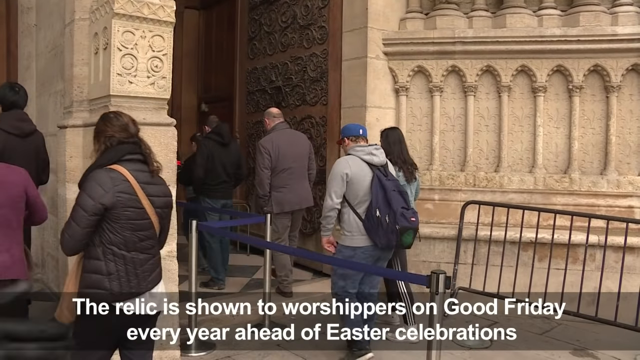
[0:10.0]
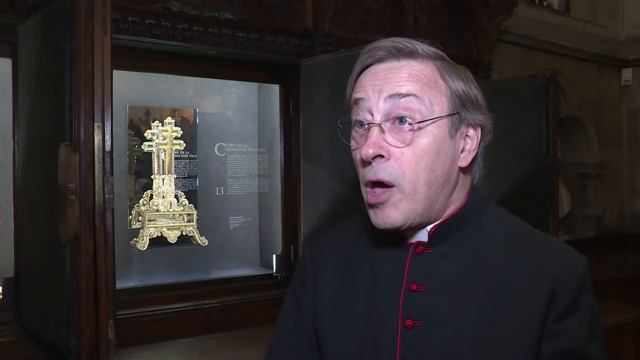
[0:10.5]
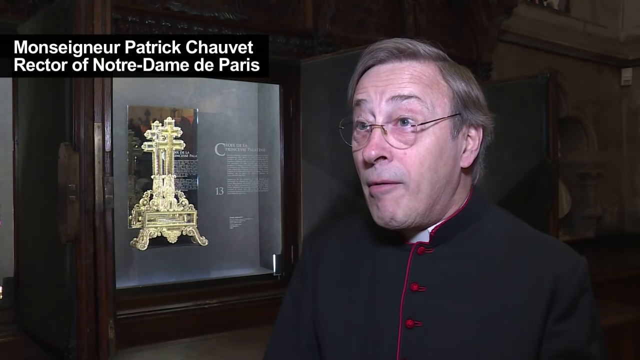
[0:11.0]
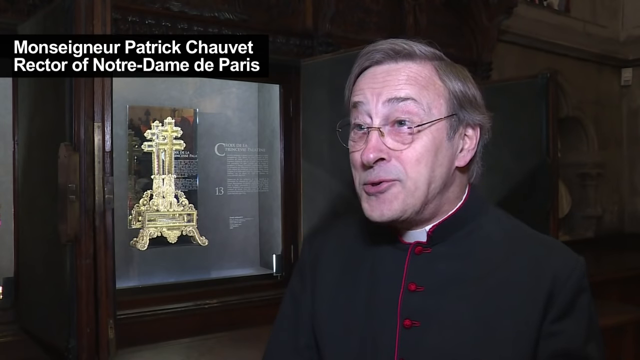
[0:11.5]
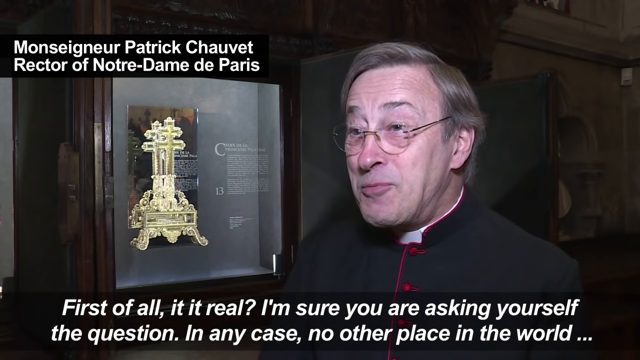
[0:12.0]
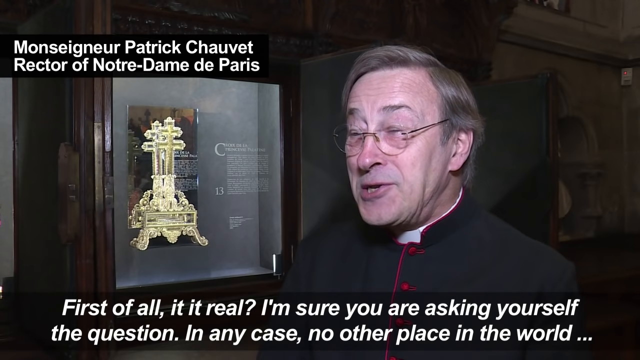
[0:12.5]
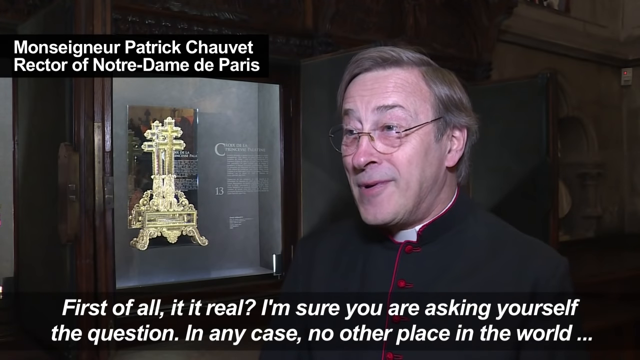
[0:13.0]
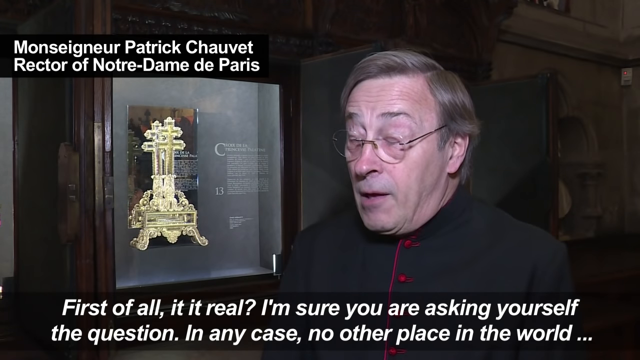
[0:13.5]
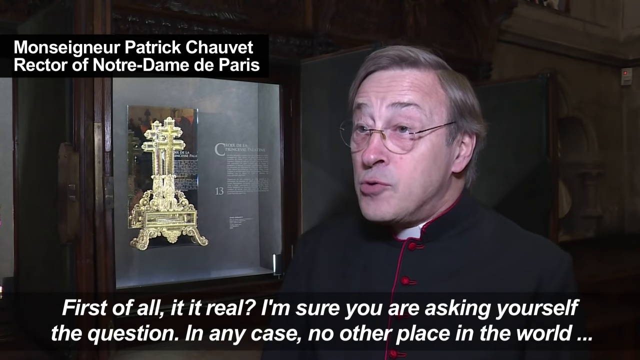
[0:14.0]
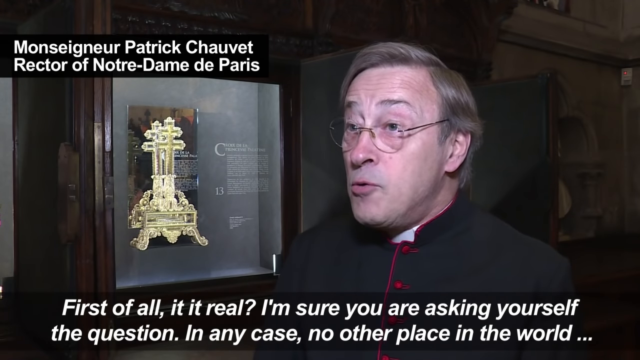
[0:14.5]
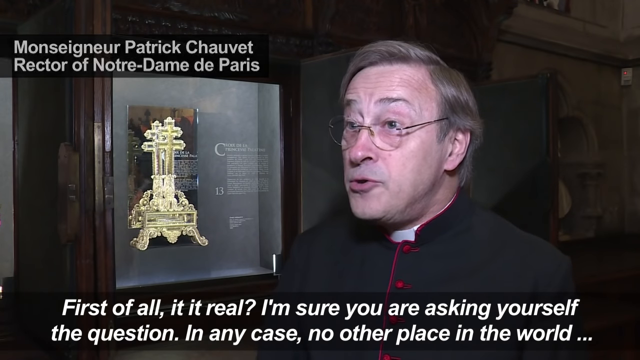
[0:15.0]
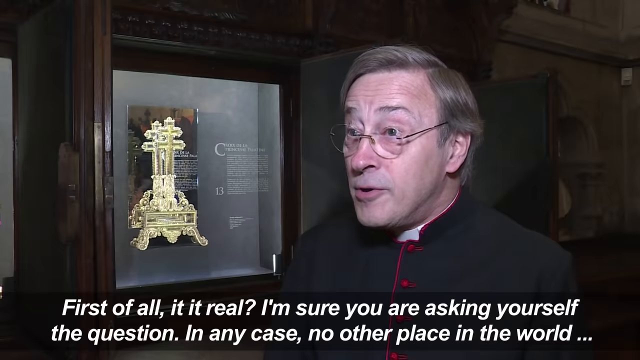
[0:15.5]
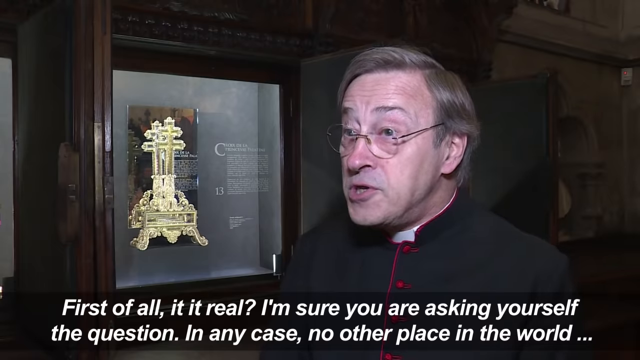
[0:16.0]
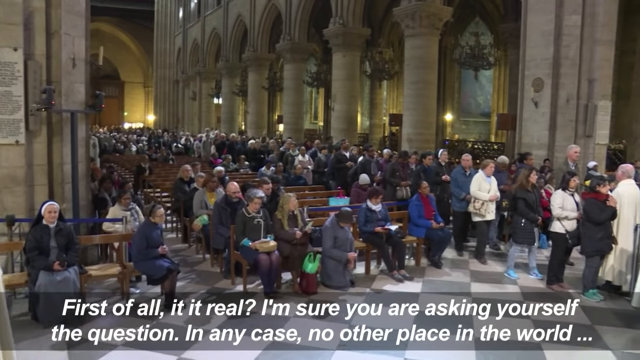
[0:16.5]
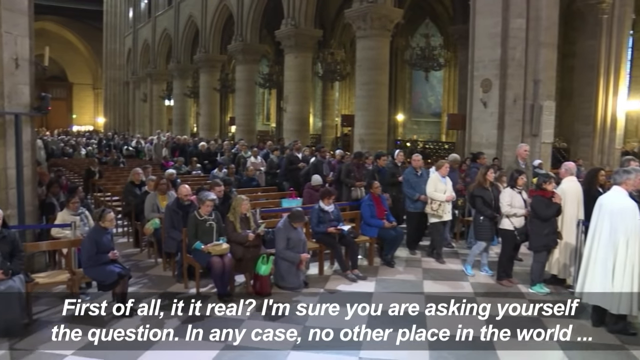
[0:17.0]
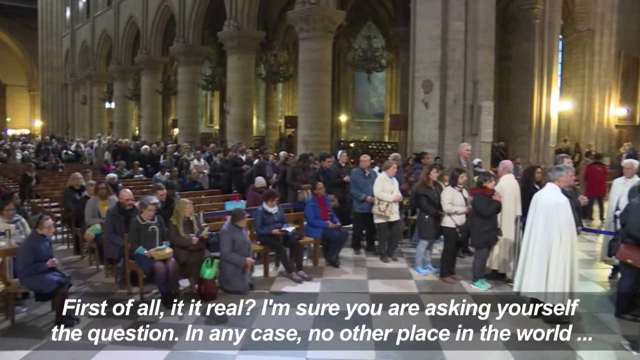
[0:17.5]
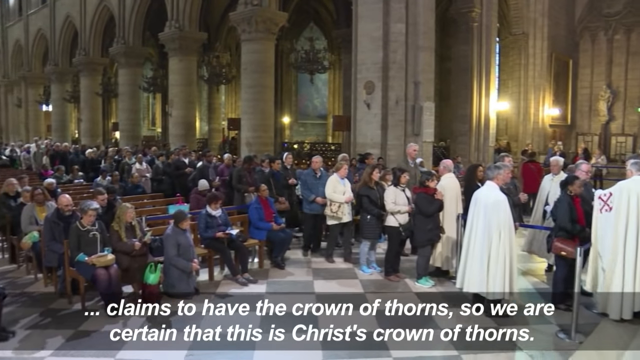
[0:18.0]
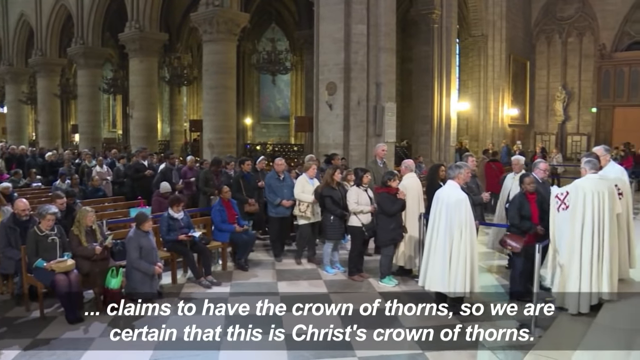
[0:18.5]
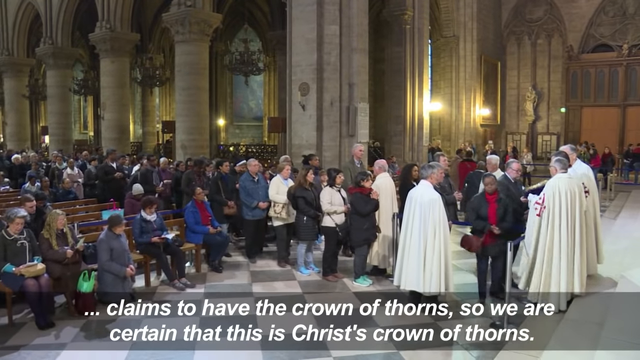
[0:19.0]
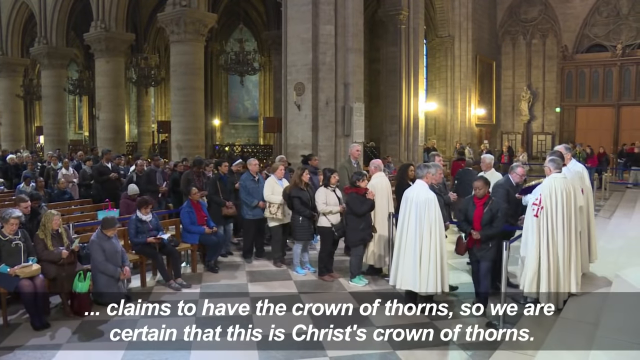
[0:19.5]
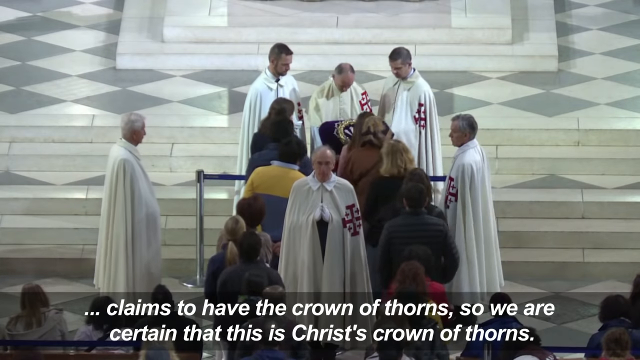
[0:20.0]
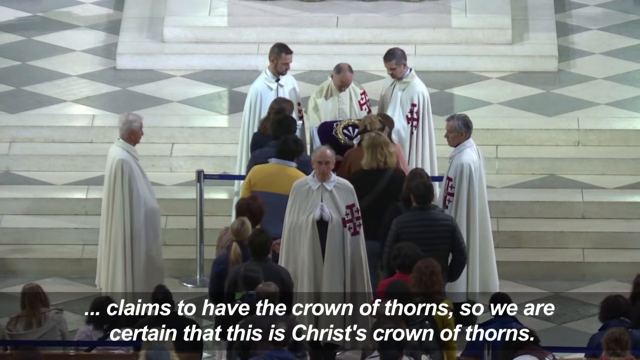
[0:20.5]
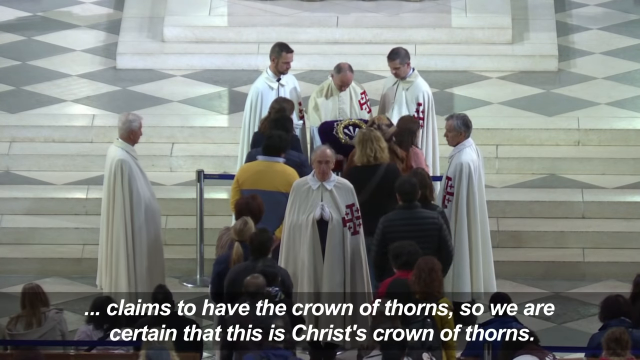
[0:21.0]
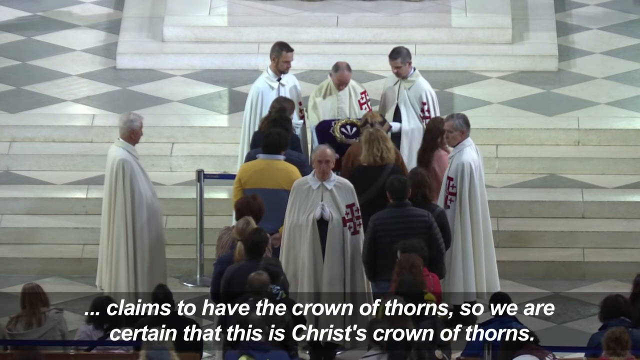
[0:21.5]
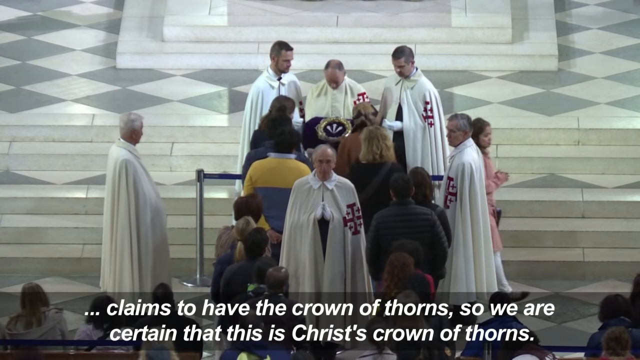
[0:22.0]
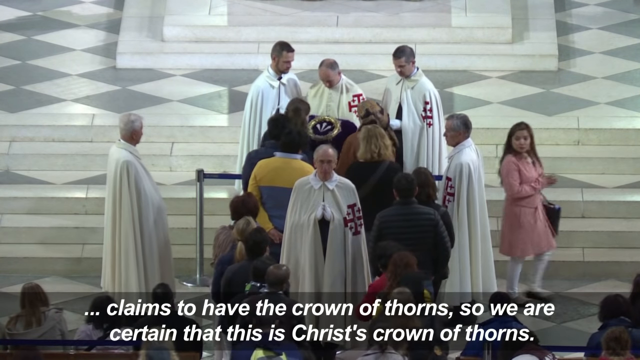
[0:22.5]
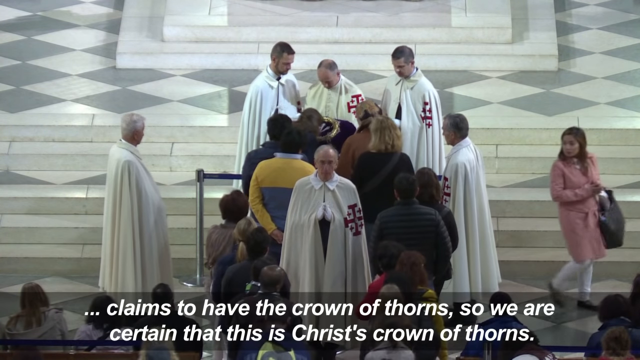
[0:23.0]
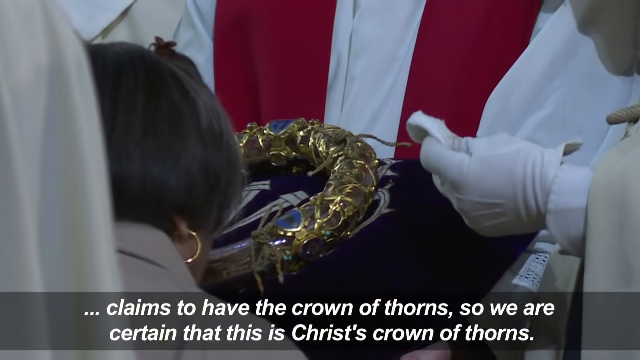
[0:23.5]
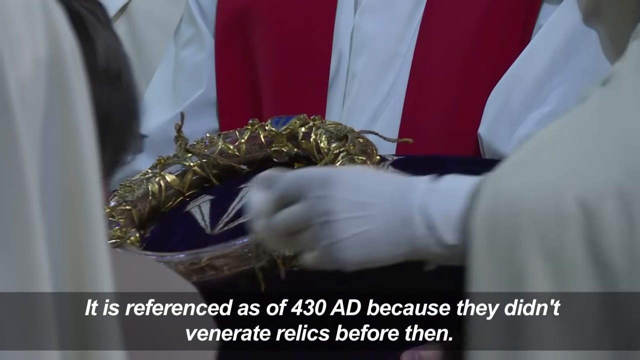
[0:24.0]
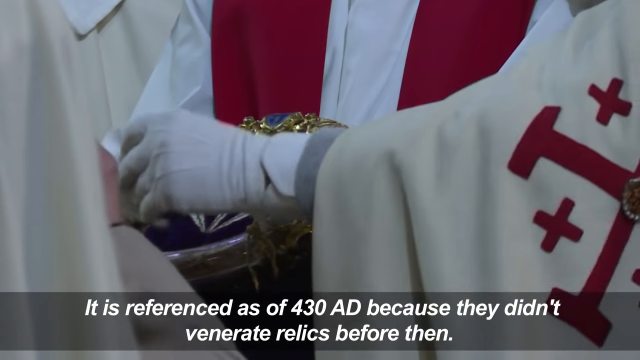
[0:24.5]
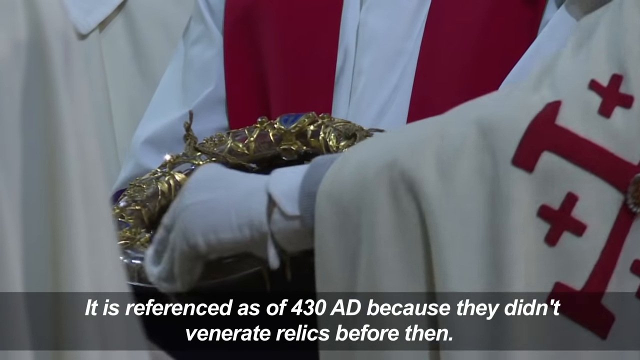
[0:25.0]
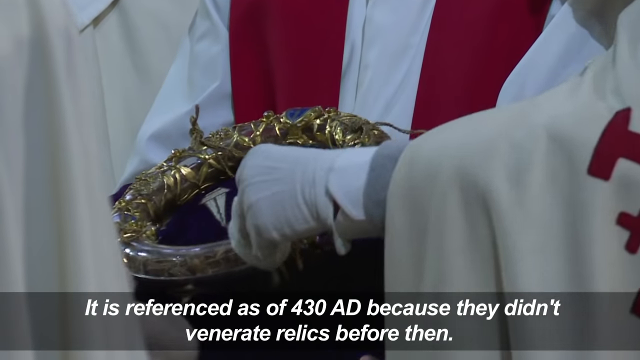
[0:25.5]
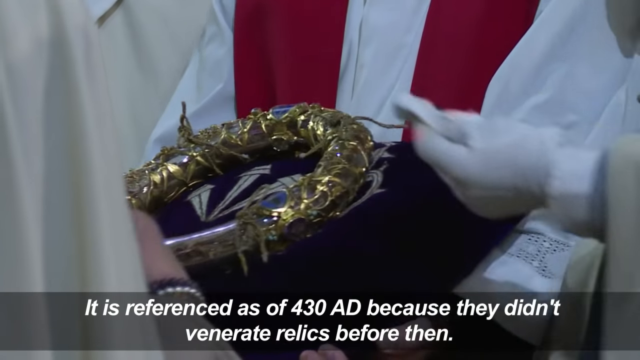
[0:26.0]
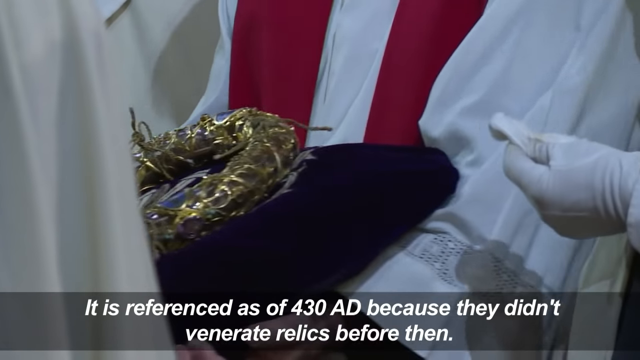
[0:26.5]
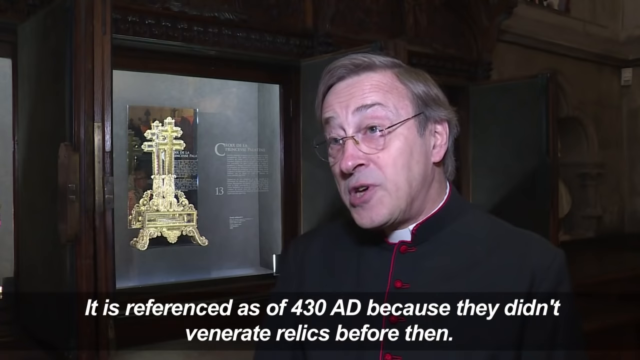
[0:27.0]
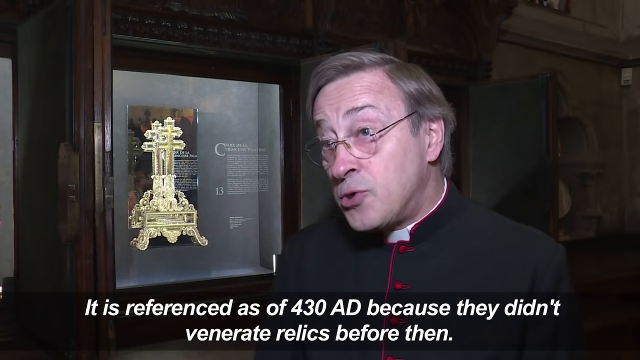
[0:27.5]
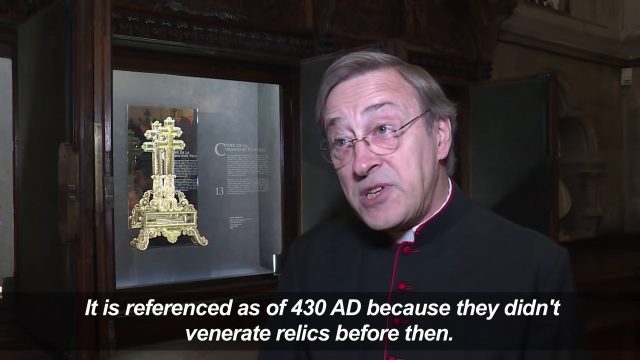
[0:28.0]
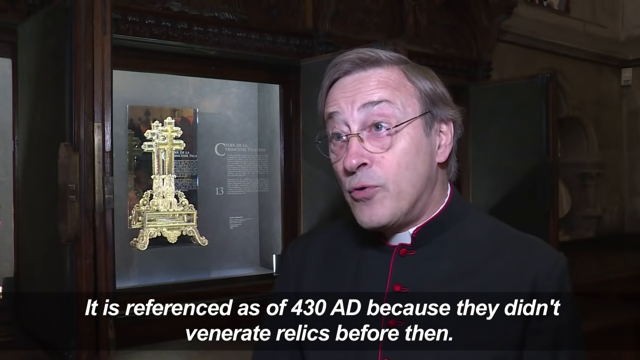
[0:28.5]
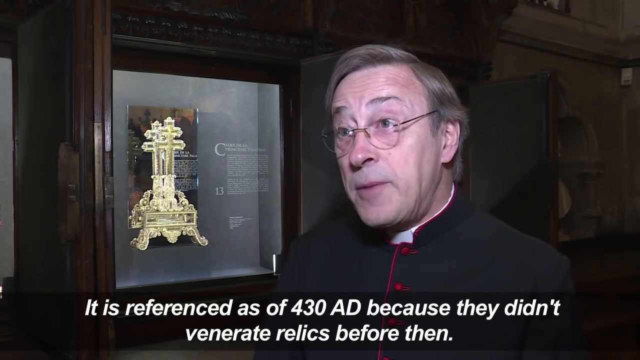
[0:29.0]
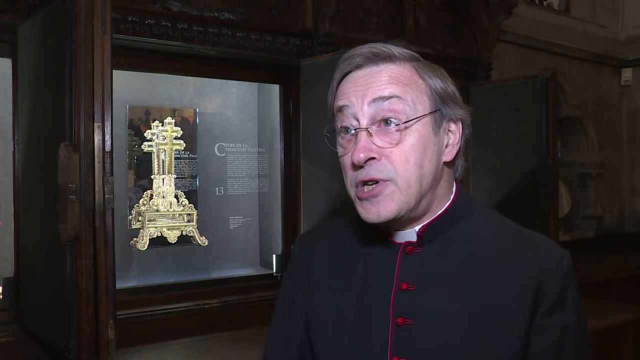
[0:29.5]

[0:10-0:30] The priest, Monsignor Patrick Chabot, a white man in a black outfit, speaks to the camera. He asks whether it is real, and says that no other place in the world claims to have the crown of thorns, so they are certain that this is Christ's crown of thorns. An image of the crown is shown, followed by shots of people inside the church and of some clergy. A rope divides the people off from the crown, which looks gold. People do not actually kiss the crown itself; they appear to kiss a piece of plastic over top of it. The segment ends with a view of people waiting in line inside the church.